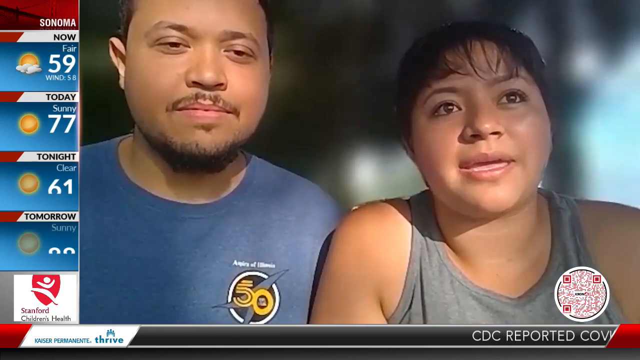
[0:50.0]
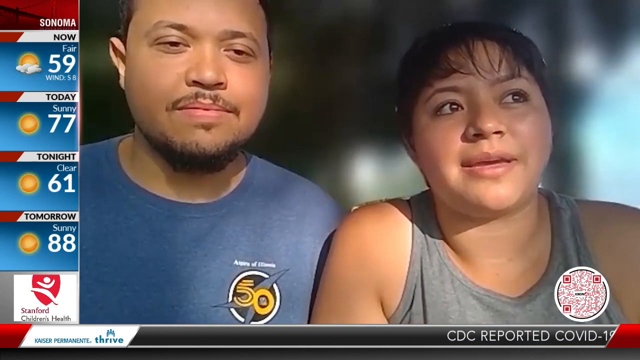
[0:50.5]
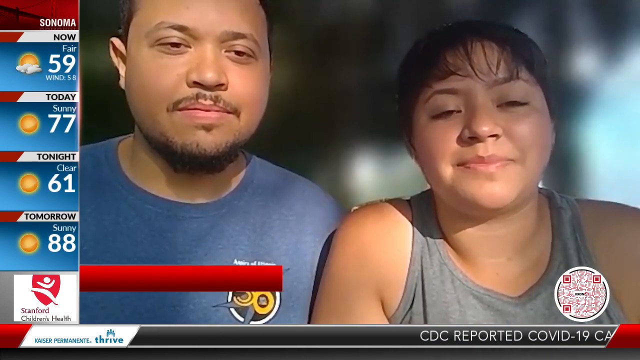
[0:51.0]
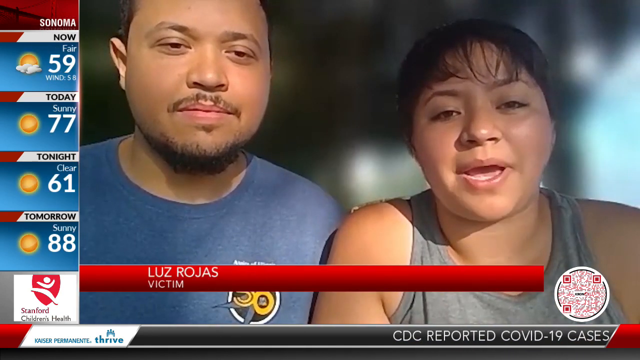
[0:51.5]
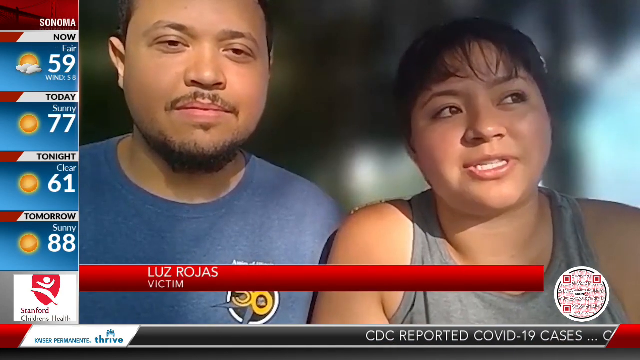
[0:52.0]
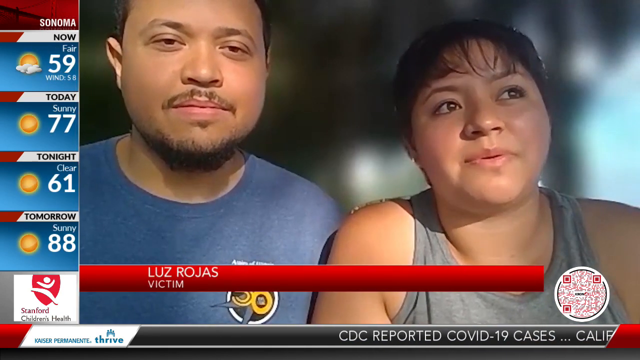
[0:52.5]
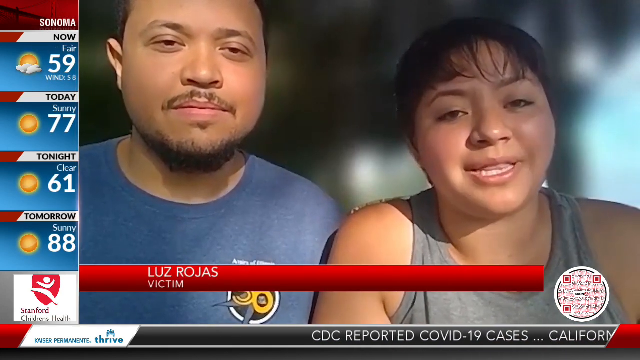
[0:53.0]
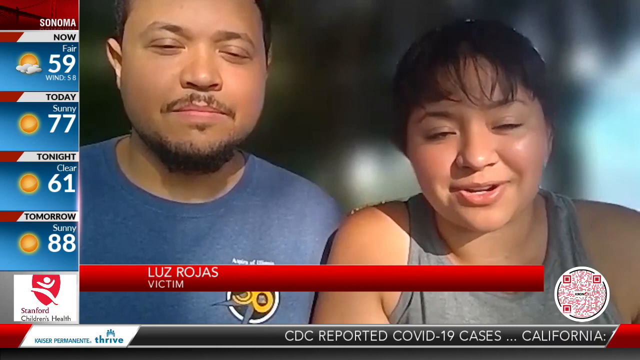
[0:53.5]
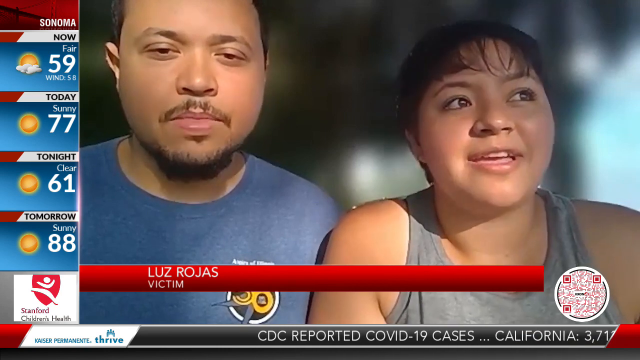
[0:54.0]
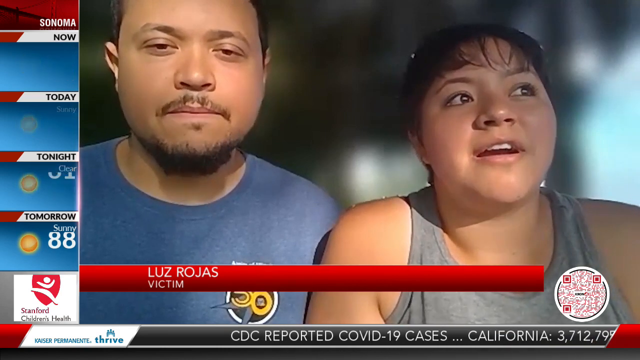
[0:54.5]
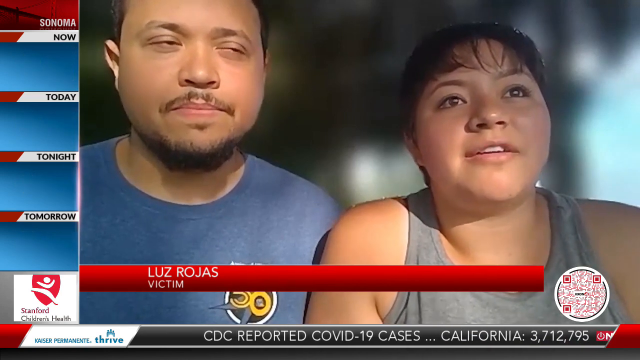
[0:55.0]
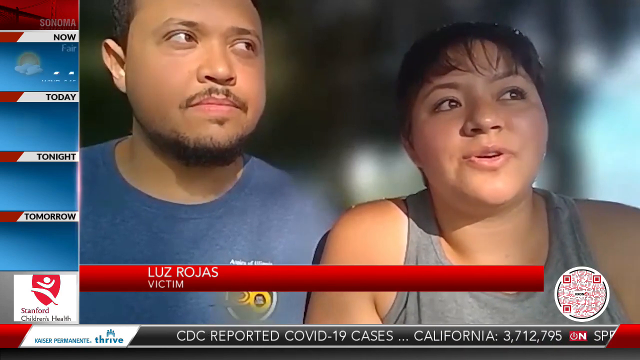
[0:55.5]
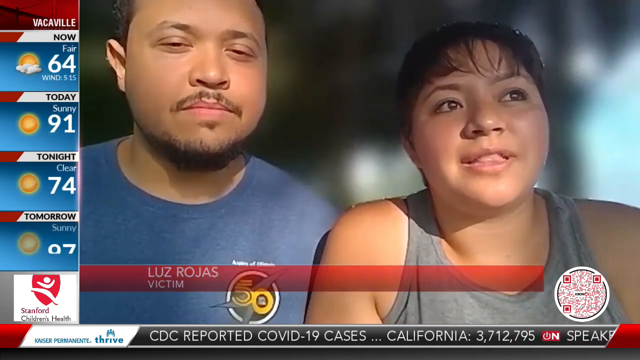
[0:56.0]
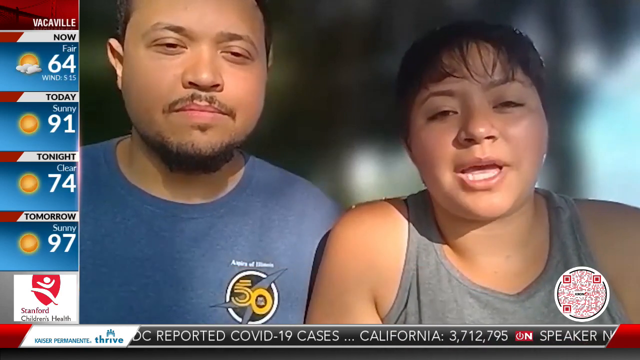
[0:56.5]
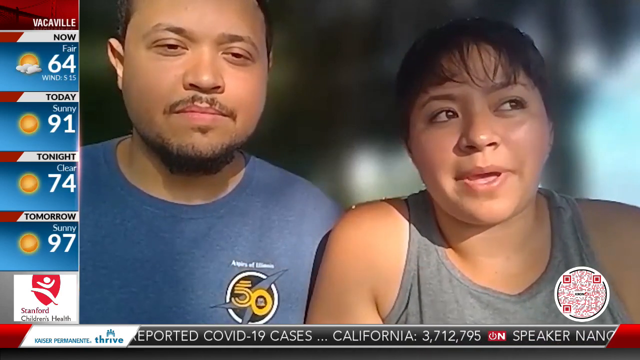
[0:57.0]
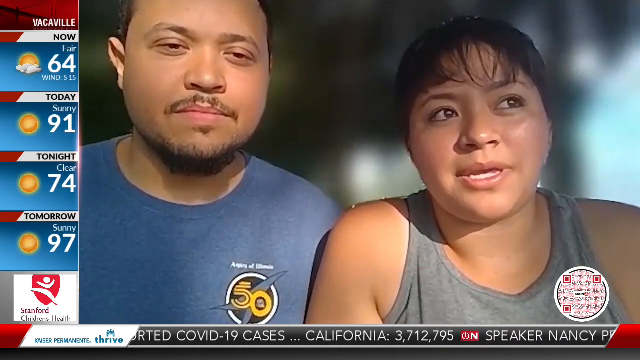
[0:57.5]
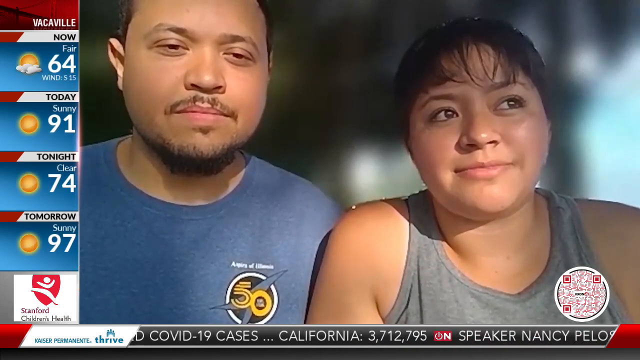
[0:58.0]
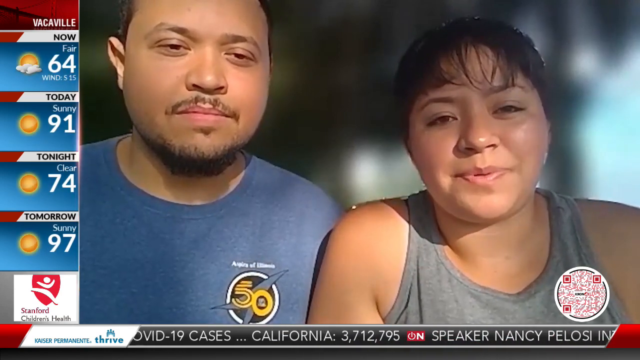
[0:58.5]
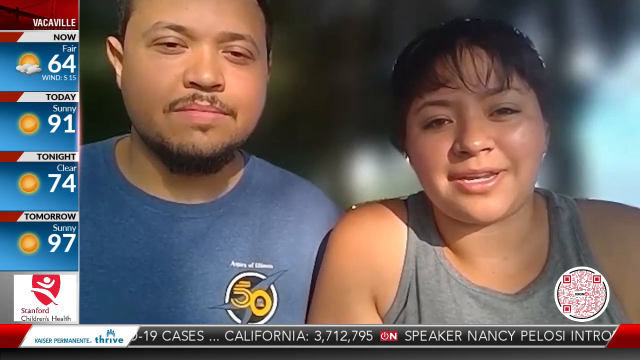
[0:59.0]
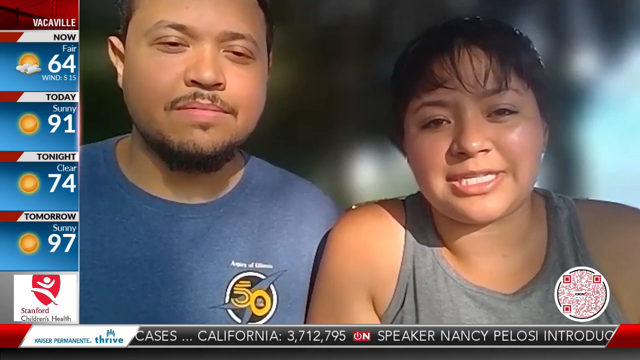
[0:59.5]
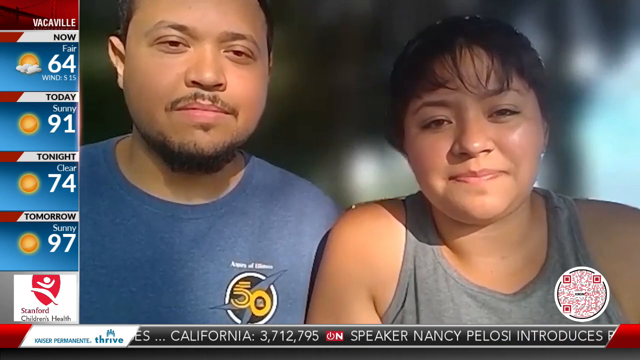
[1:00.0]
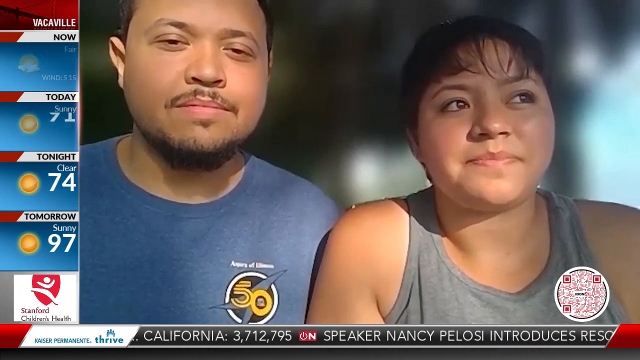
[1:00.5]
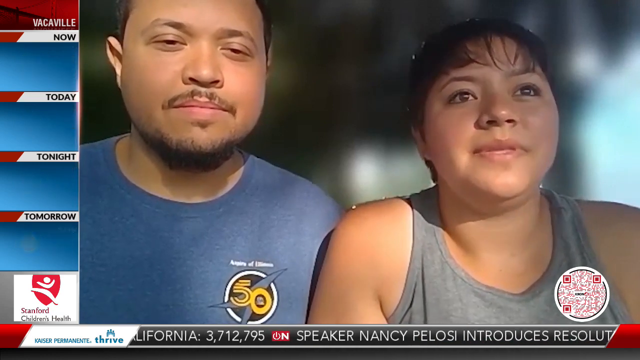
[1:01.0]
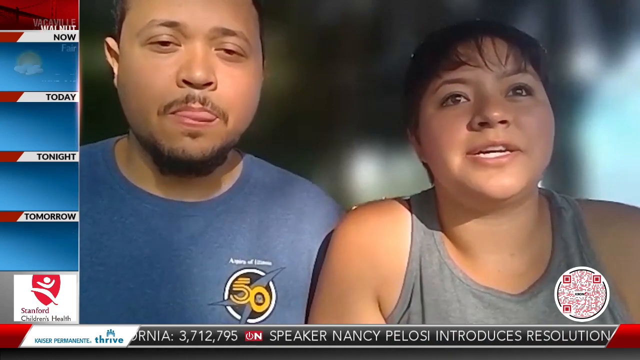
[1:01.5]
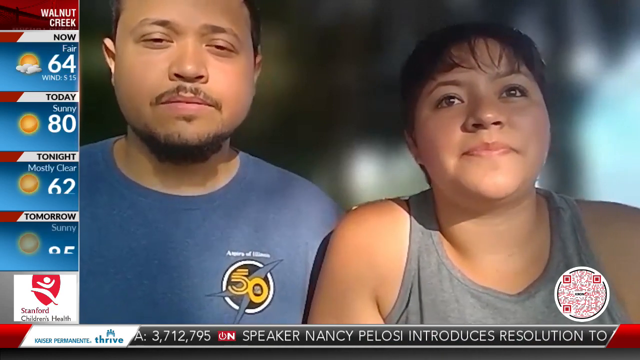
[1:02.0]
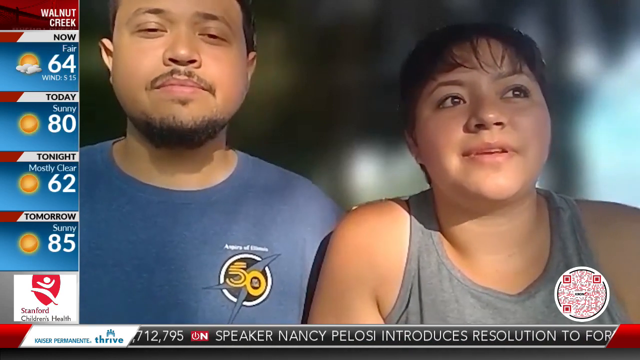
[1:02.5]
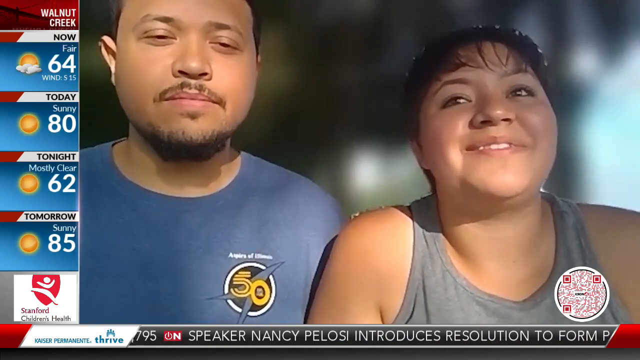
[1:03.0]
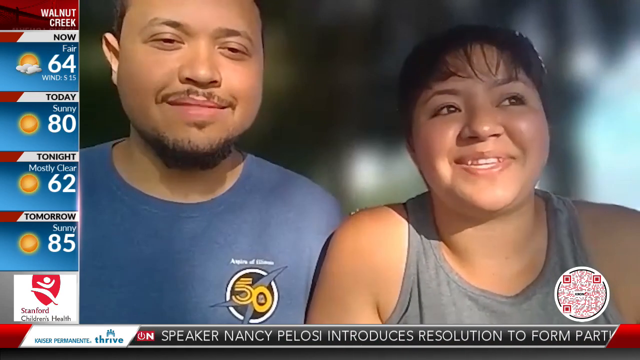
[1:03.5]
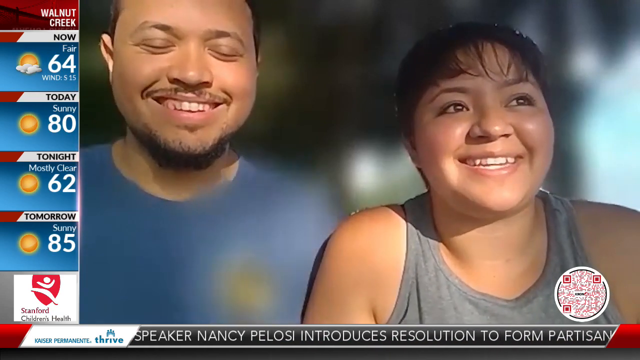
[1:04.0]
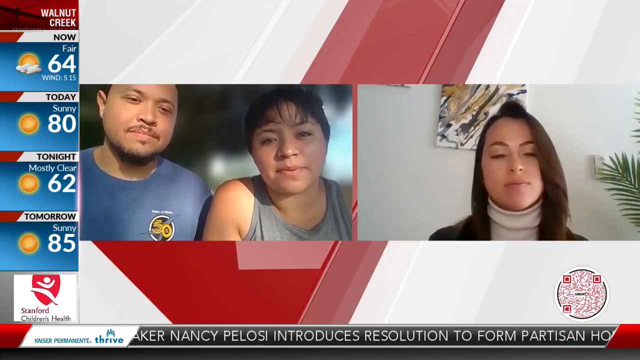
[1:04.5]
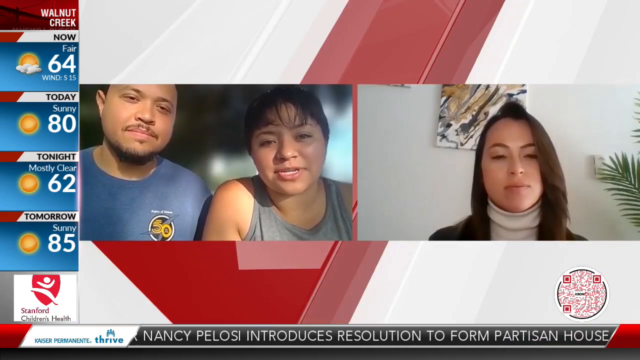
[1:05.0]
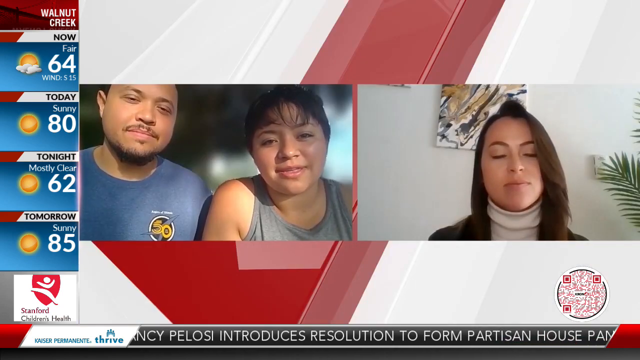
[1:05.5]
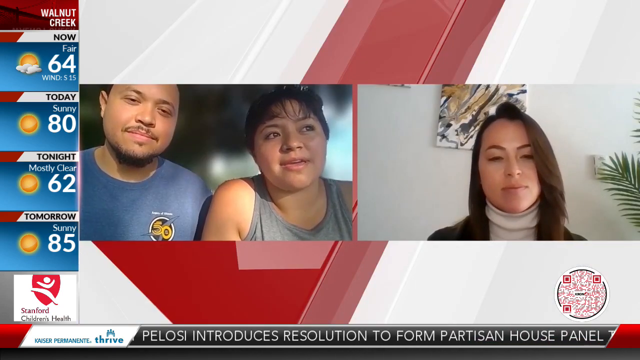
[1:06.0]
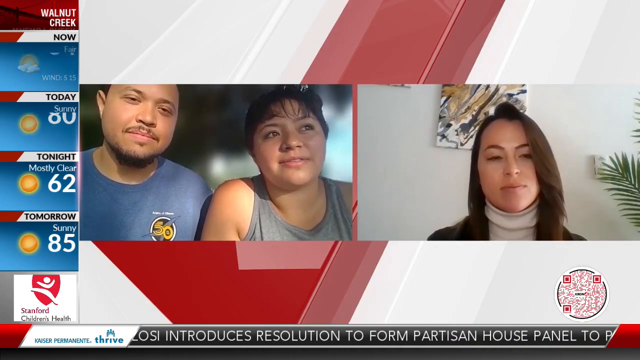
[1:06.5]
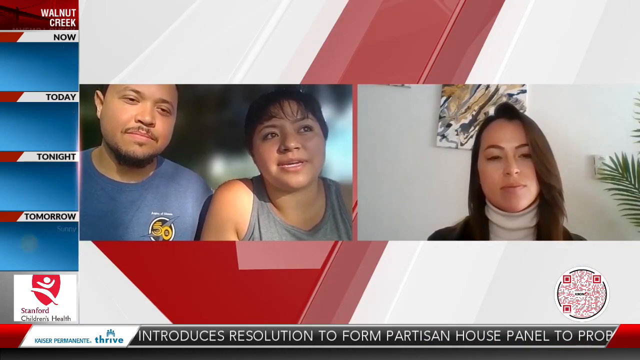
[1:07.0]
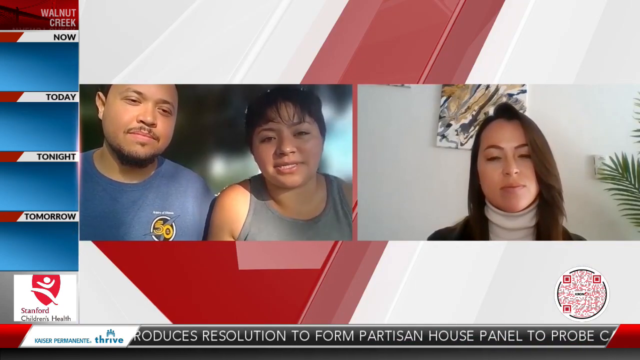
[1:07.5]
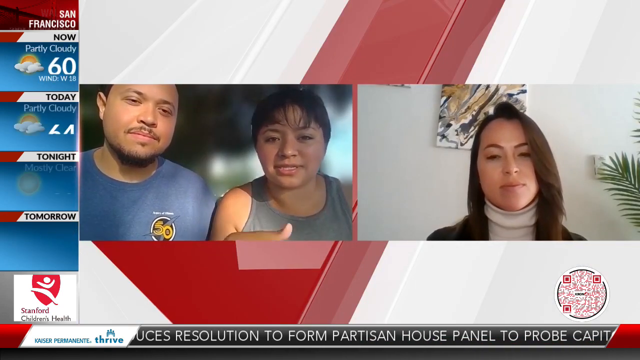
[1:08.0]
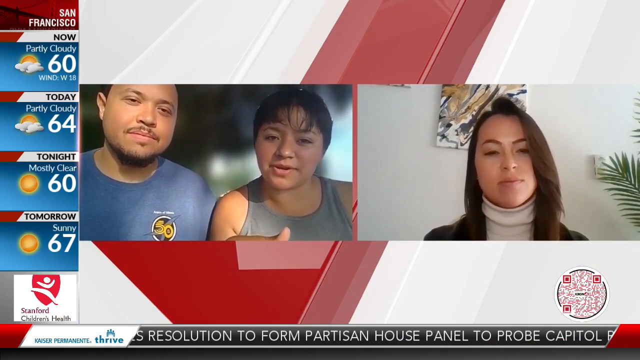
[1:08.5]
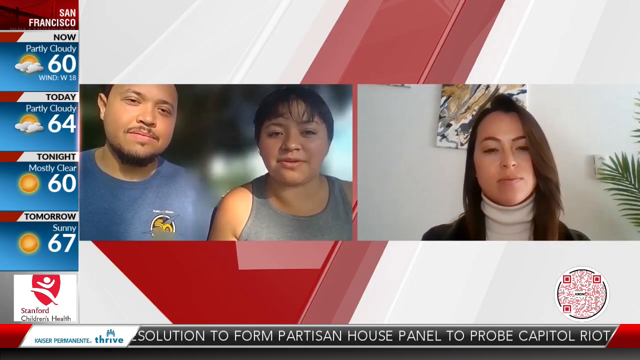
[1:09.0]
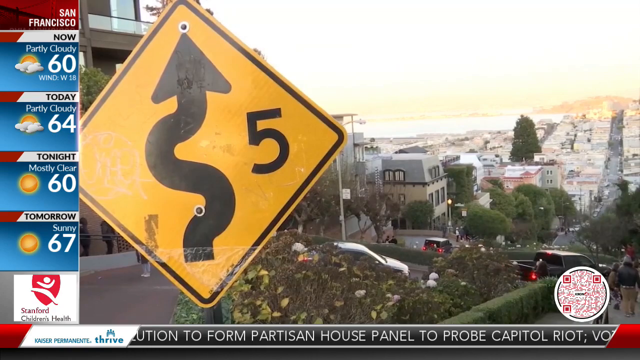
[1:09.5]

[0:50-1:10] The two victims talk to the camera, the man in a blue shirt and the woman in a gray tank top. A red banner comes across them showing their names and identifying them as the victims. In the bottom right-hand corner is a circle with a QR code that says "KRON number 4", the news channel. On the left-hand side, weather forecasts continue as the victims talk, now for Vacaville and Walnut Creek, changing as the video goes on, and then for San Francisco. The view changes to a split screen of the victims alongside one of the newscasters, who listens and nods as they talk. The next shot is an aerial view of a city skyline.